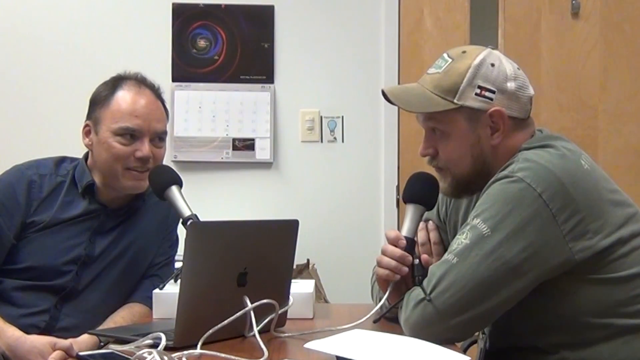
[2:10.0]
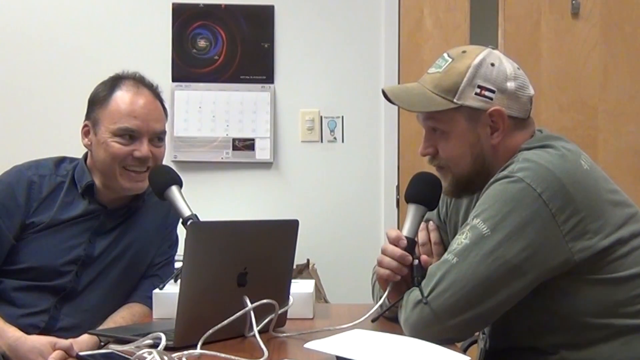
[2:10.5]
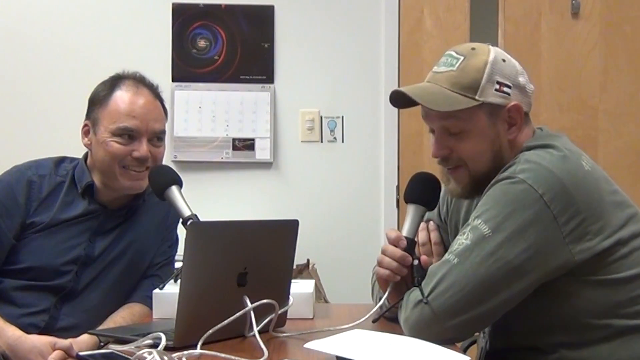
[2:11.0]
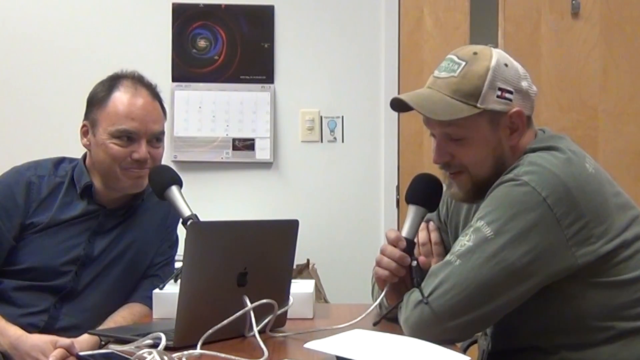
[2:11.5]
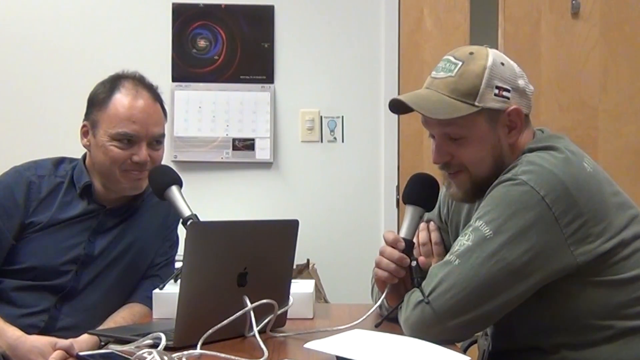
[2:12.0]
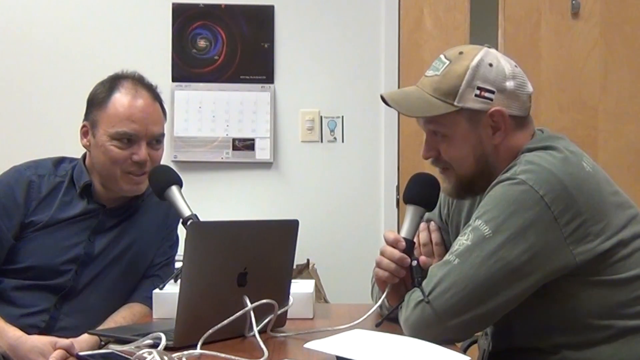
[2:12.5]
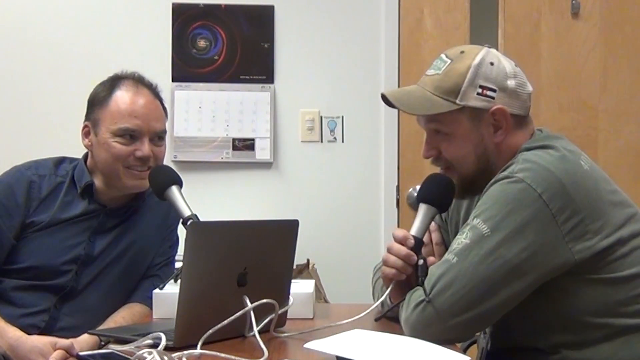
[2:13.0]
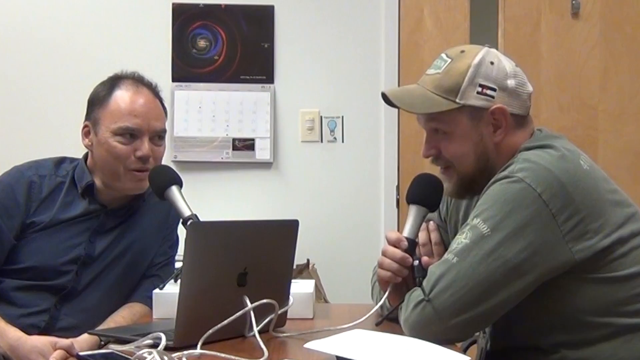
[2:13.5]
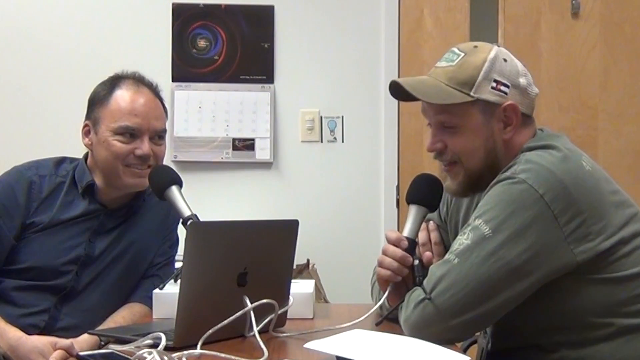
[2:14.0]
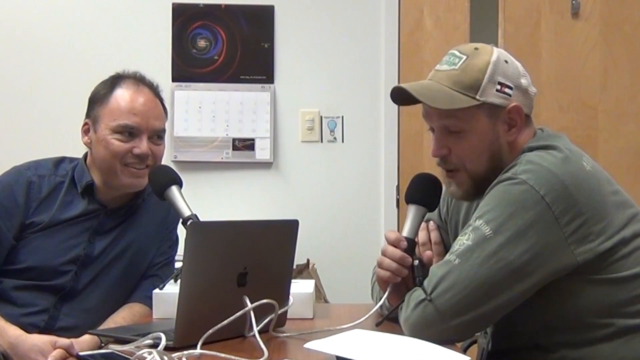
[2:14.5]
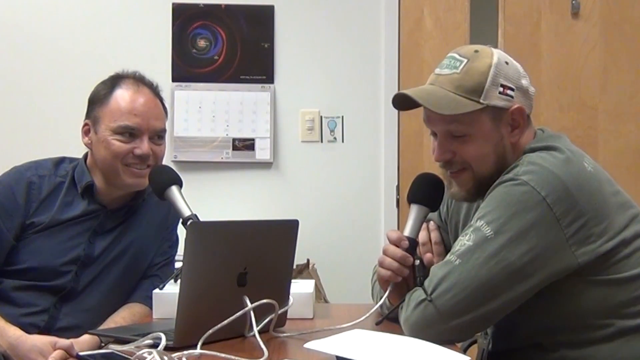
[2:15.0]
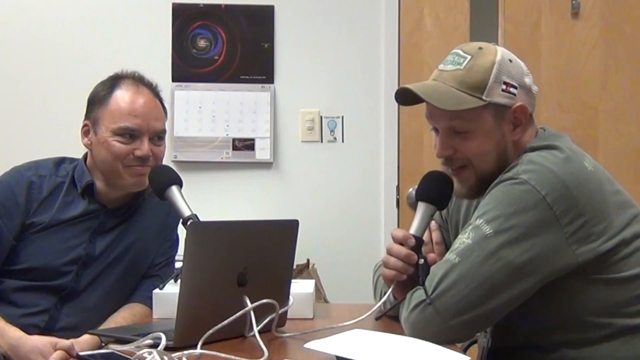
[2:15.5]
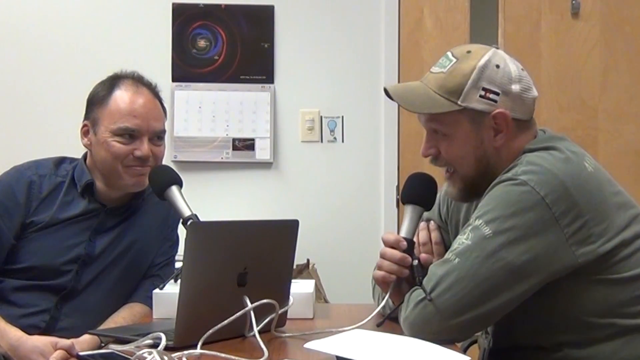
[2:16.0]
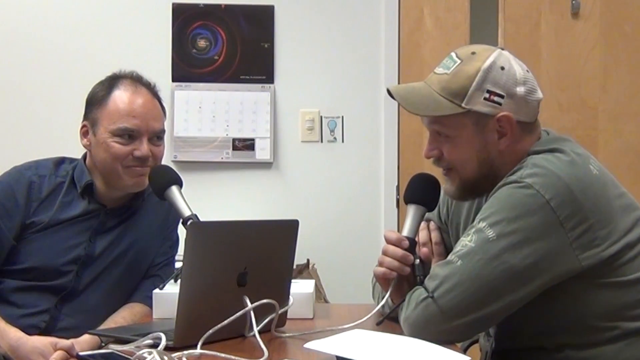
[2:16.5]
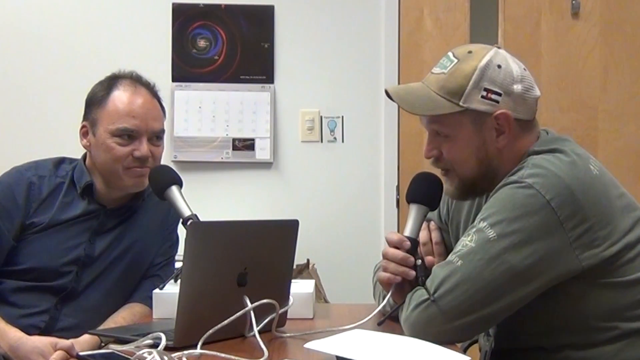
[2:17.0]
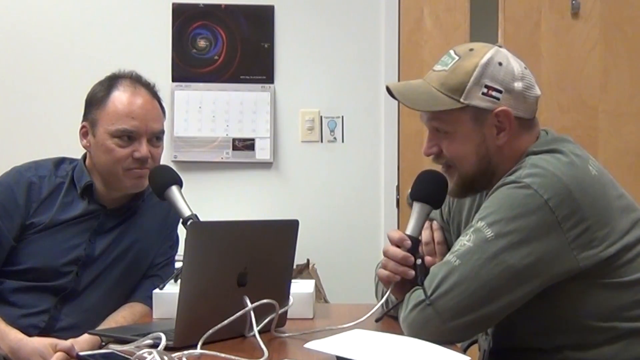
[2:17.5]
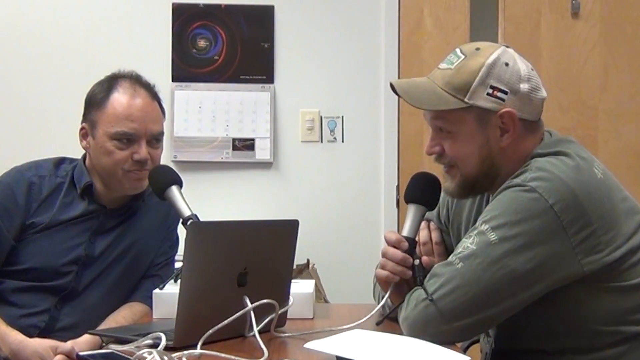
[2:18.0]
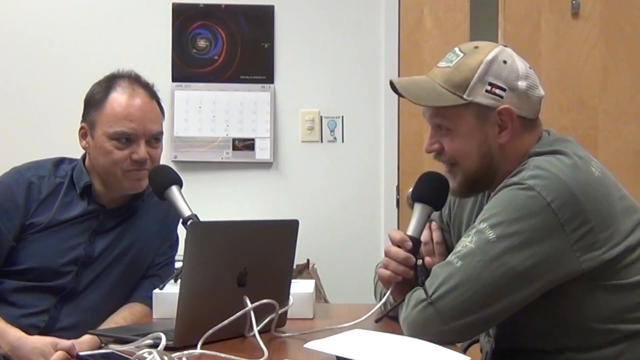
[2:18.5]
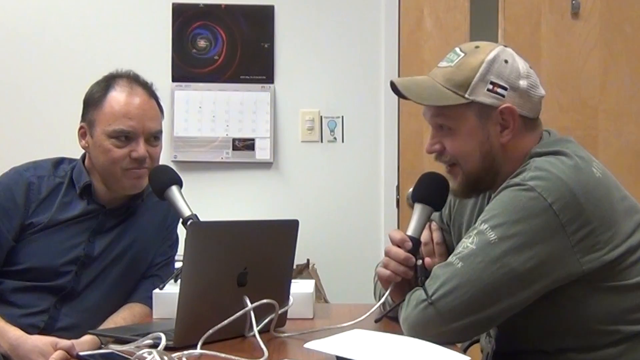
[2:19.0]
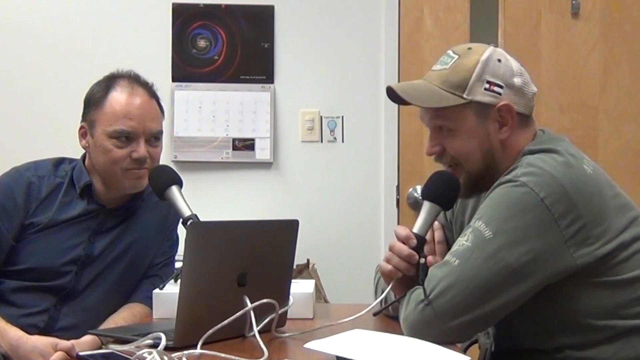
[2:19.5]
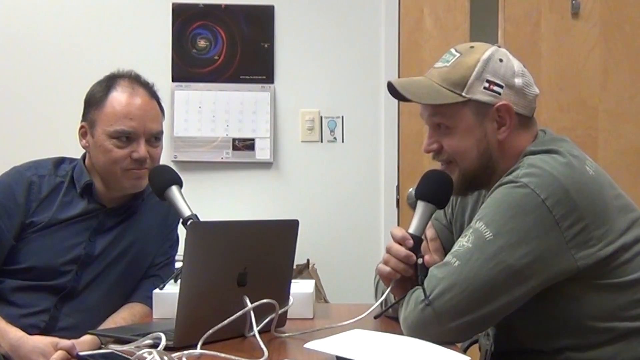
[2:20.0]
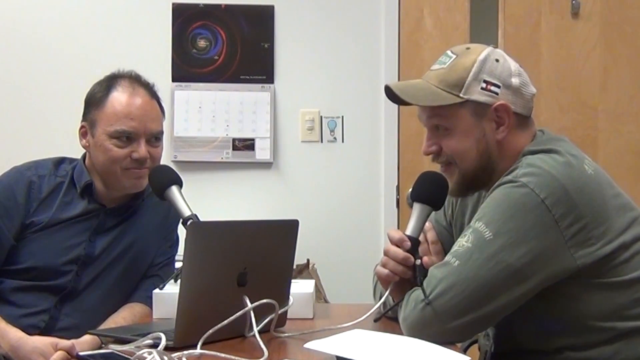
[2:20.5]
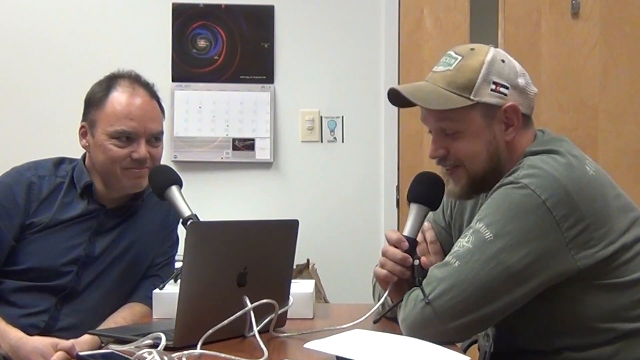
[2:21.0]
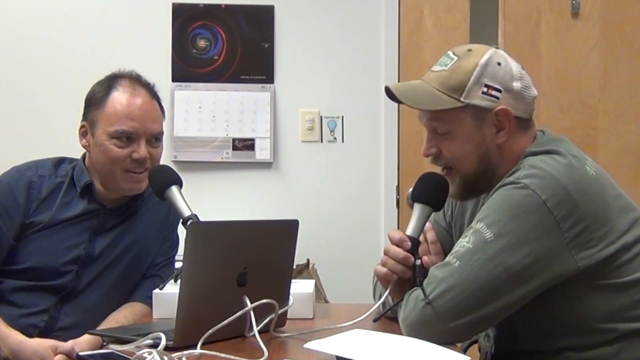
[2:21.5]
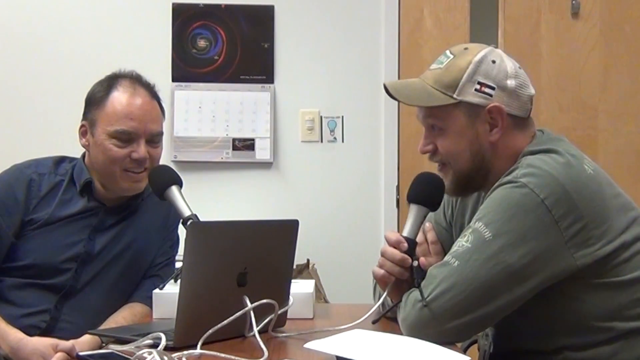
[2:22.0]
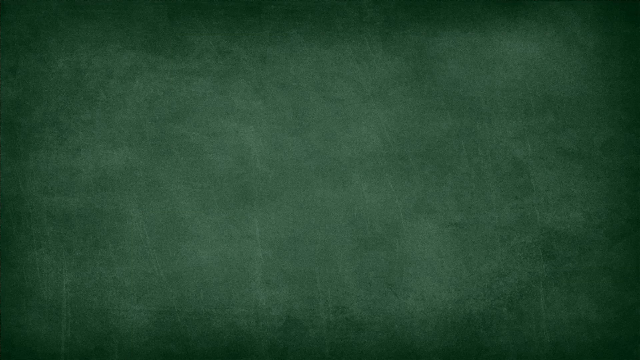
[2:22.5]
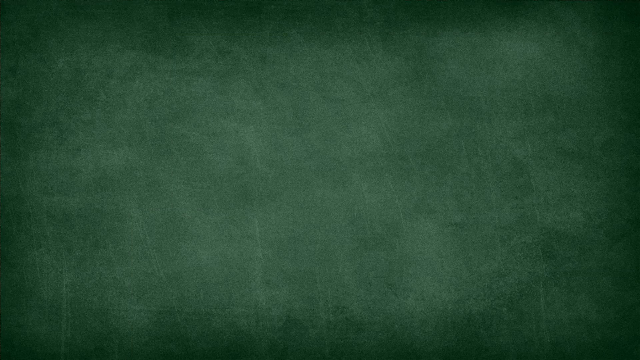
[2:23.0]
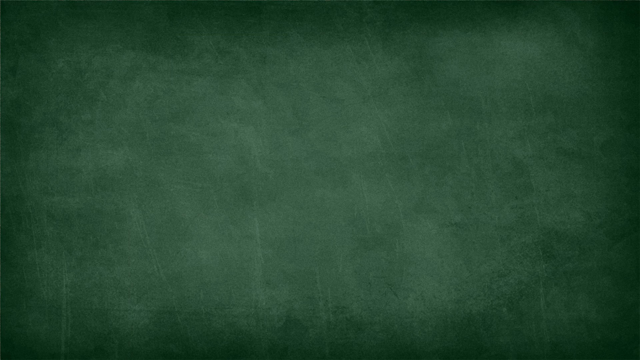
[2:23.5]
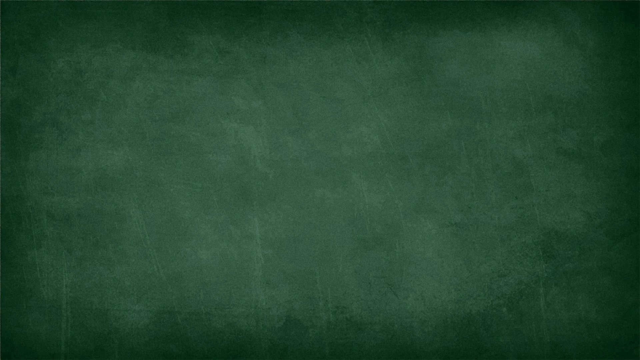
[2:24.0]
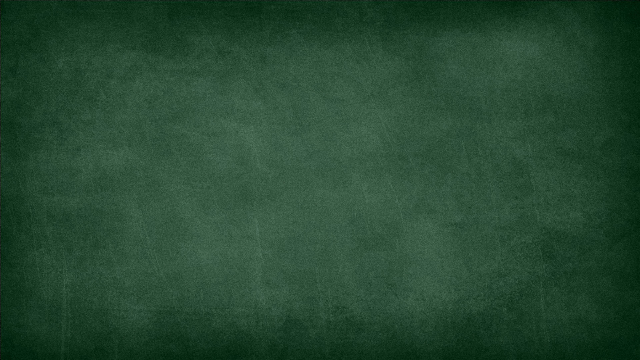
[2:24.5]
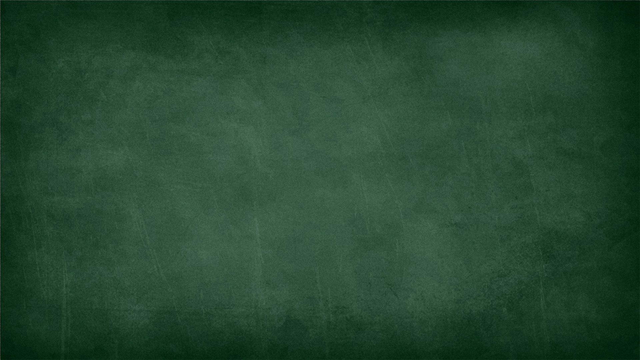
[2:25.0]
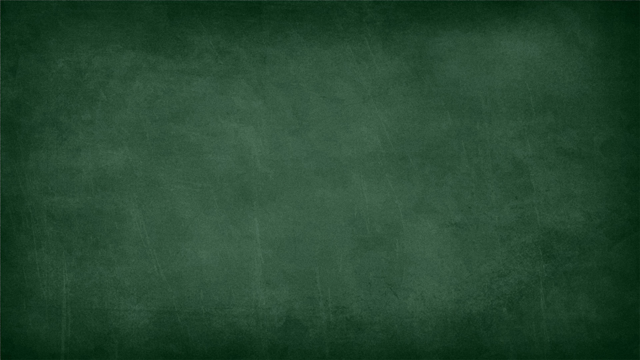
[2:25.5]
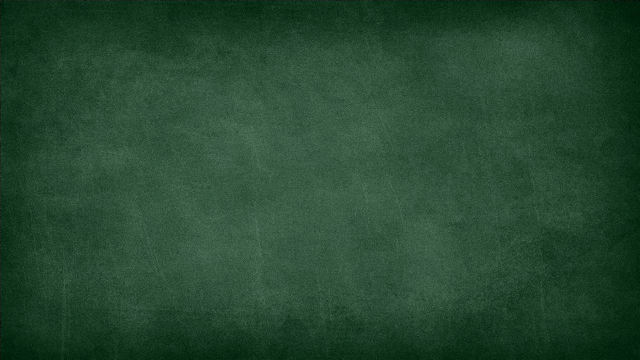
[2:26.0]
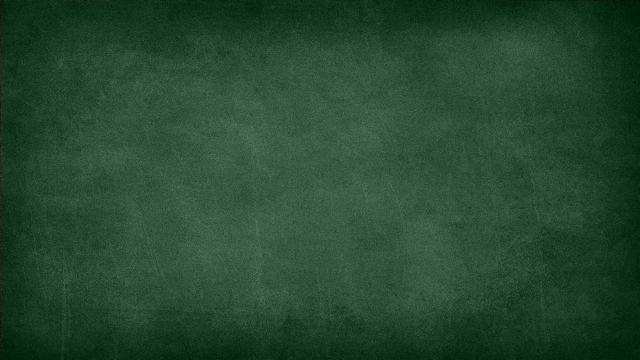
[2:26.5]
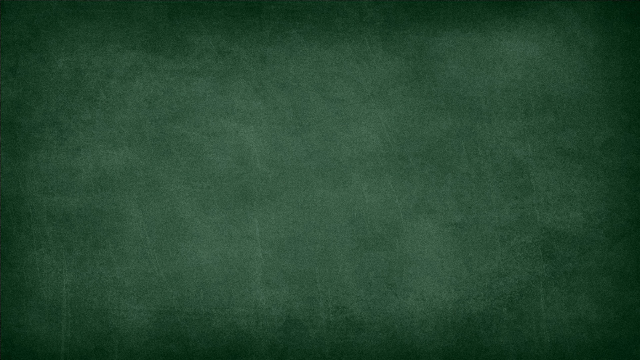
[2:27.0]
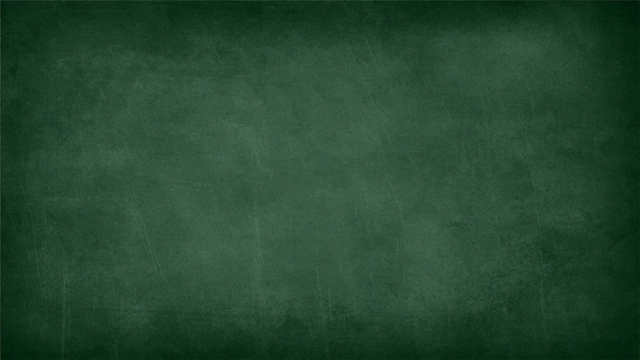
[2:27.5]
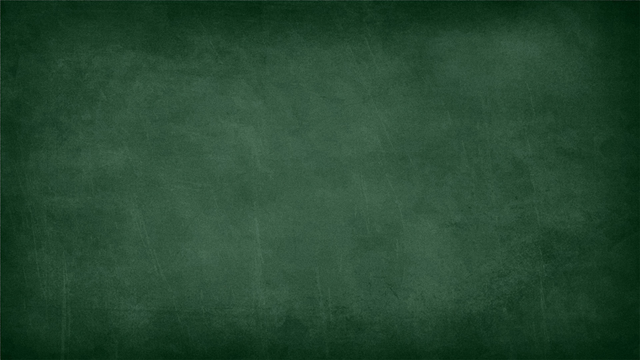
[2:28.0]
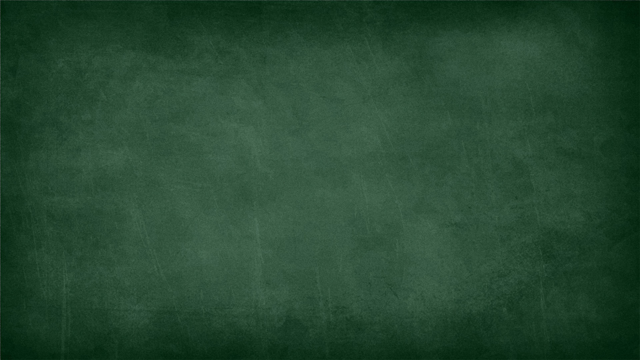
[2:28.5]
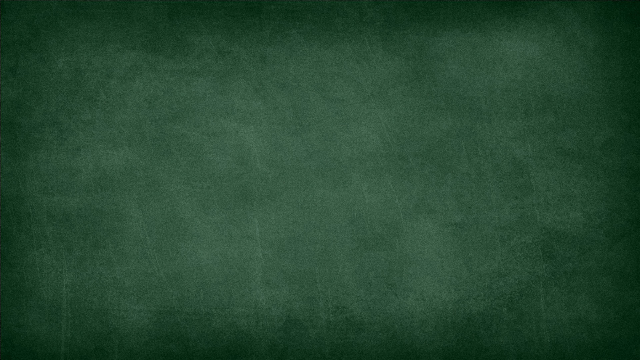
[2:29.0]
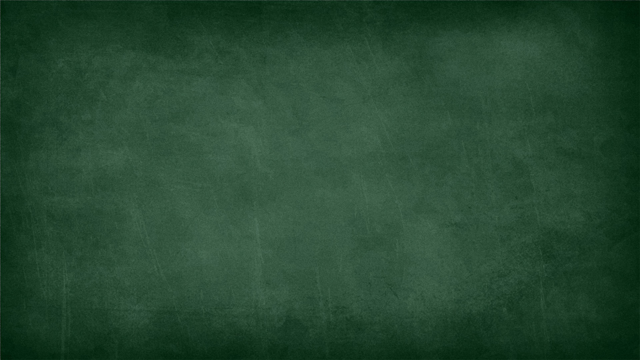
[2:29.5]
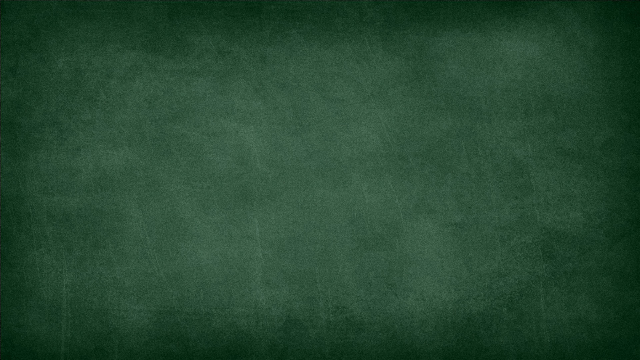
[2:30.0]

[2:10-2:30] Two men sit facing each other with microphones in front of them, presumably discussing why people deny the scientific consensus that global warming is a fact. The man on the left is in his mid-40s, with a receding hairline, dark hair, and a blue button-down shirt with the sleeves rolled up. The man on the right is in his early 30s, with lighter hair, a mustache, a beard, and a long-sleeved green shirt. The video ends on a dark, deep green screen.